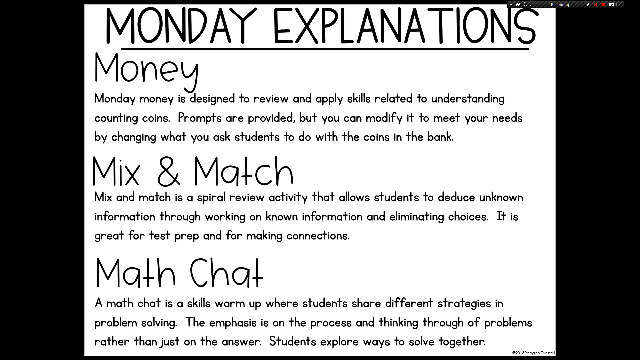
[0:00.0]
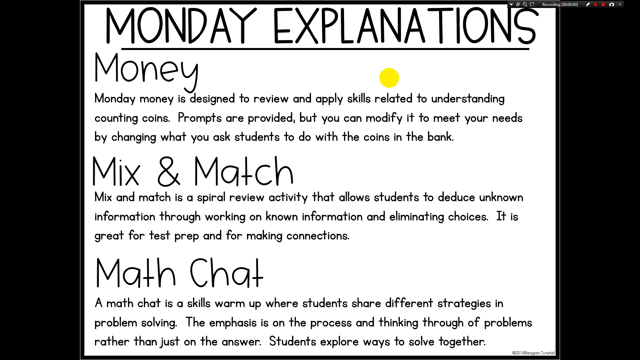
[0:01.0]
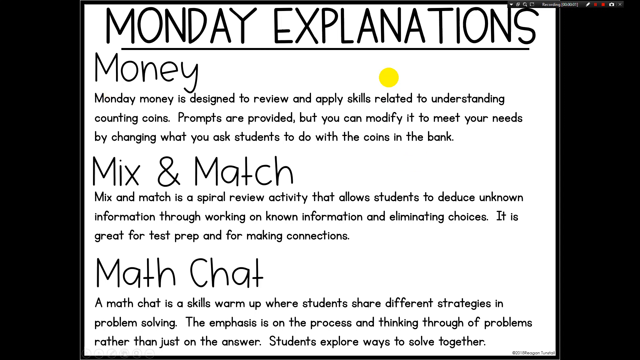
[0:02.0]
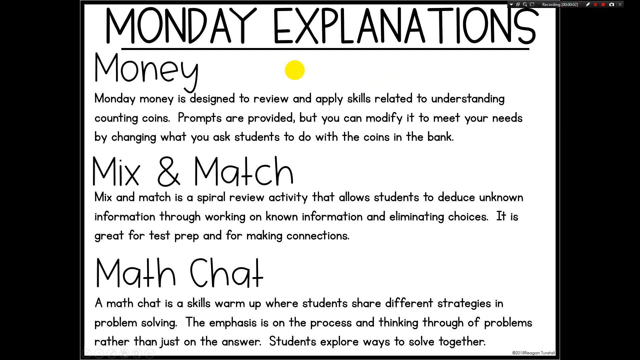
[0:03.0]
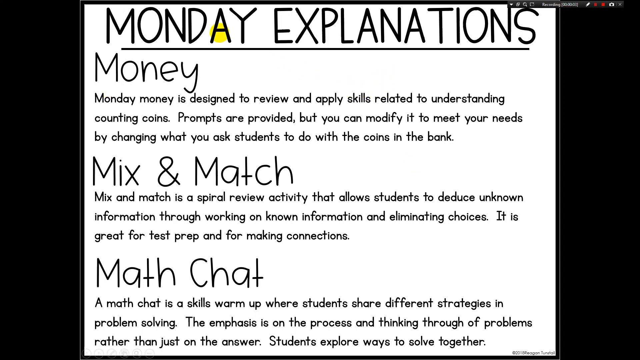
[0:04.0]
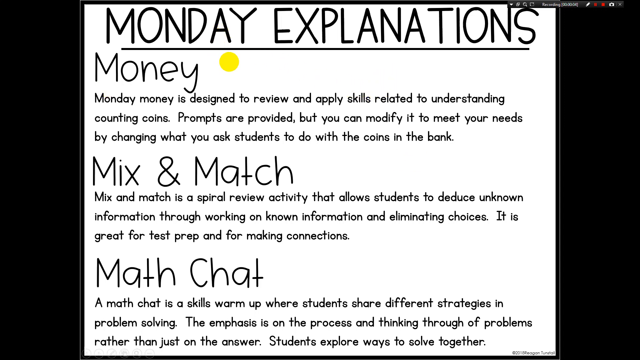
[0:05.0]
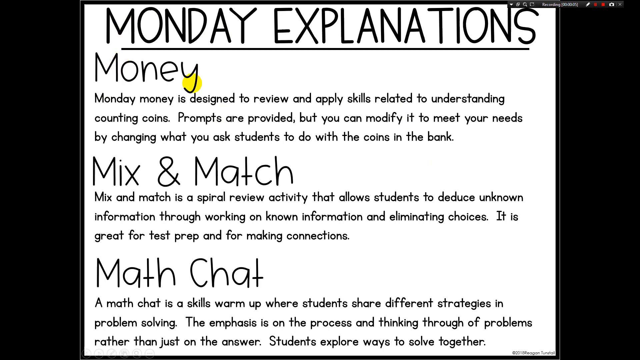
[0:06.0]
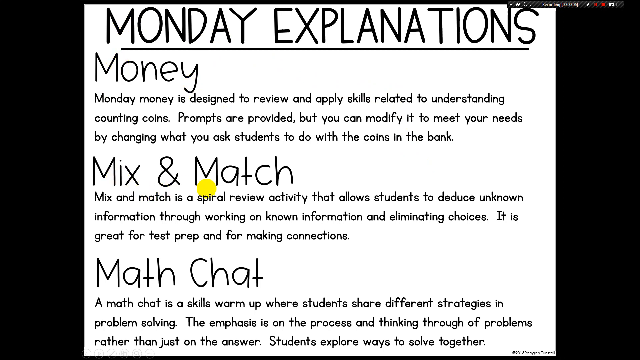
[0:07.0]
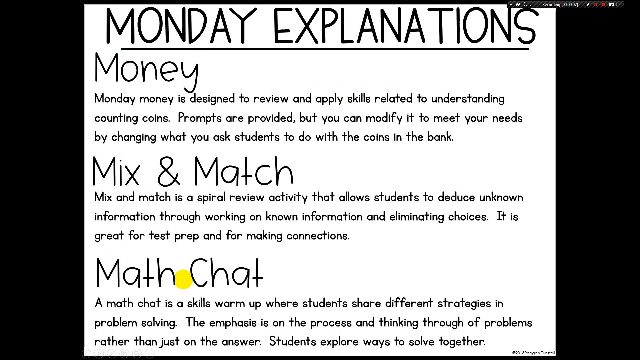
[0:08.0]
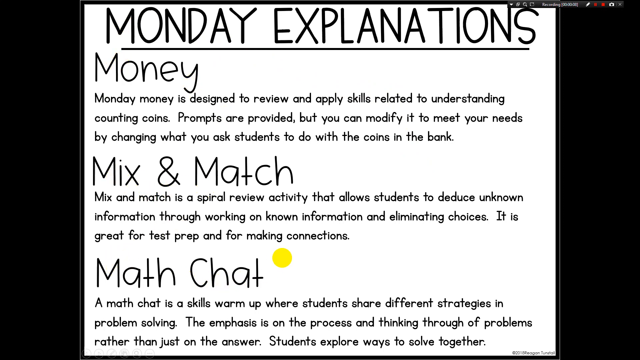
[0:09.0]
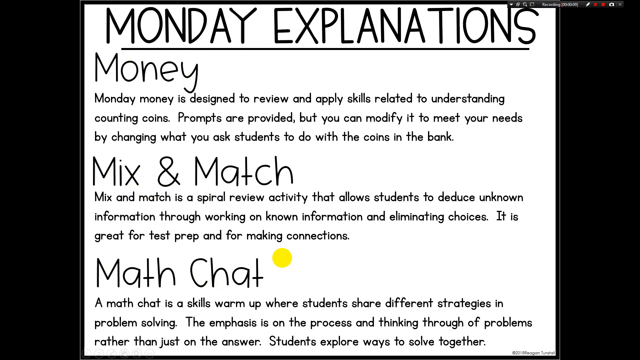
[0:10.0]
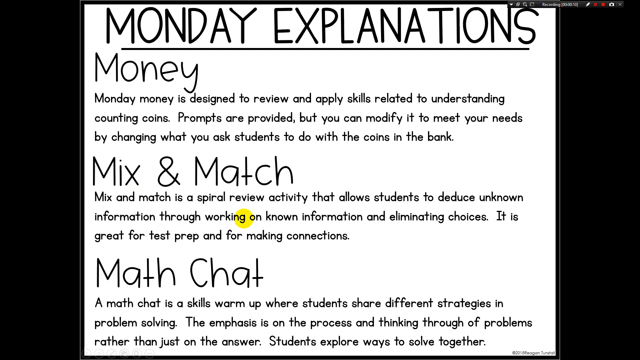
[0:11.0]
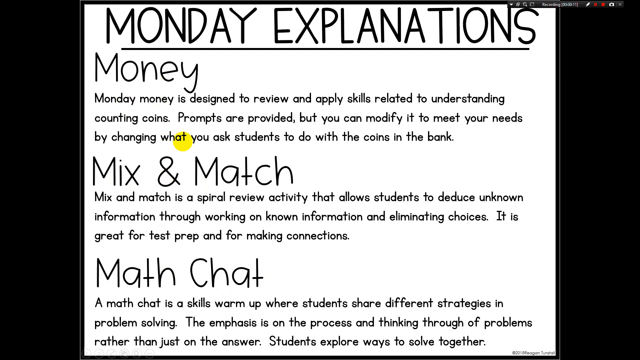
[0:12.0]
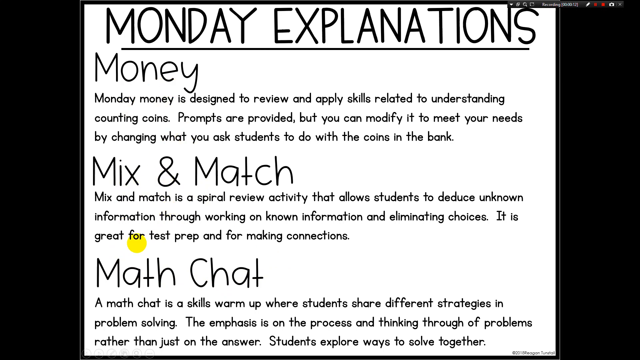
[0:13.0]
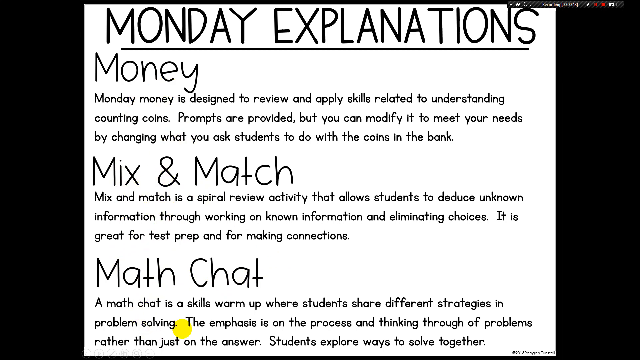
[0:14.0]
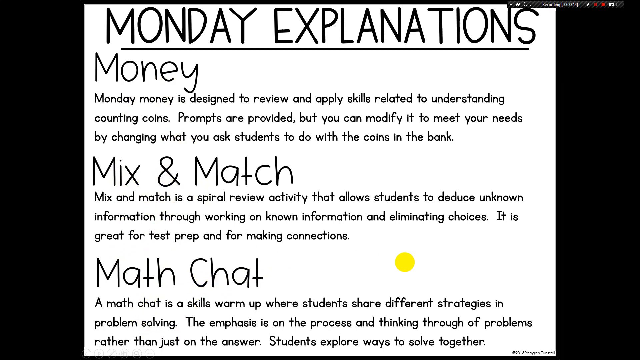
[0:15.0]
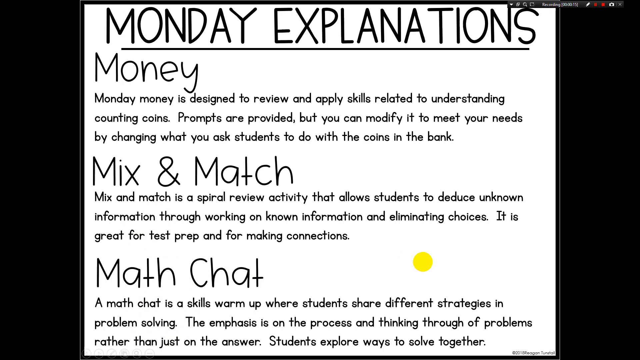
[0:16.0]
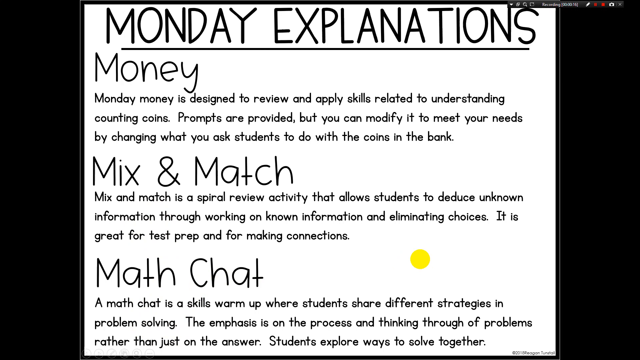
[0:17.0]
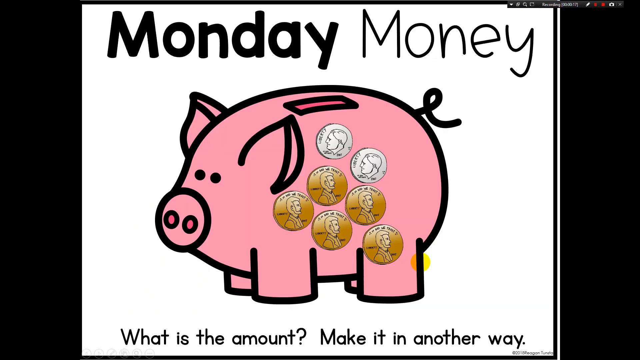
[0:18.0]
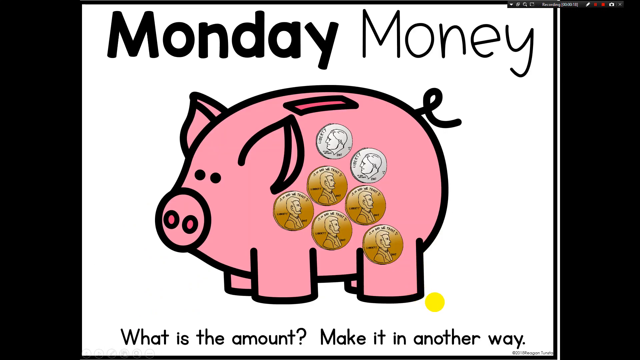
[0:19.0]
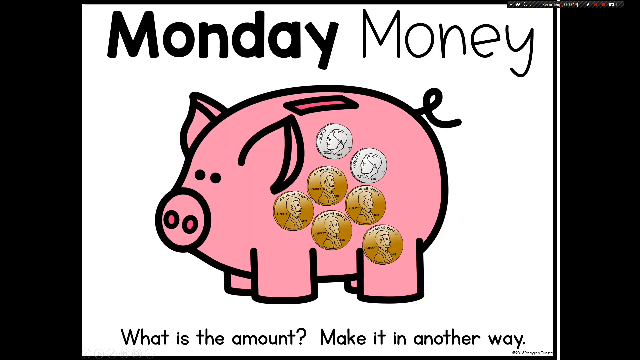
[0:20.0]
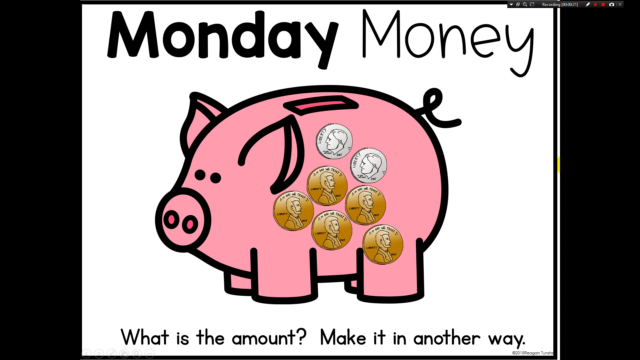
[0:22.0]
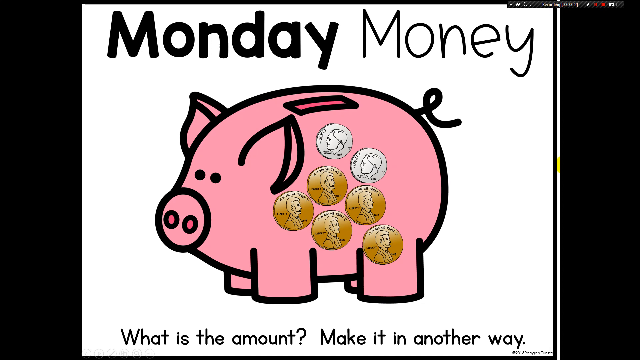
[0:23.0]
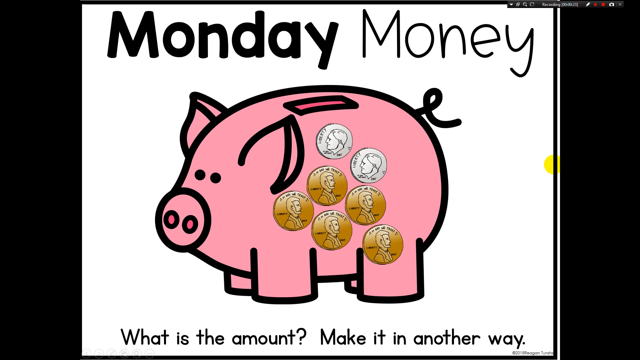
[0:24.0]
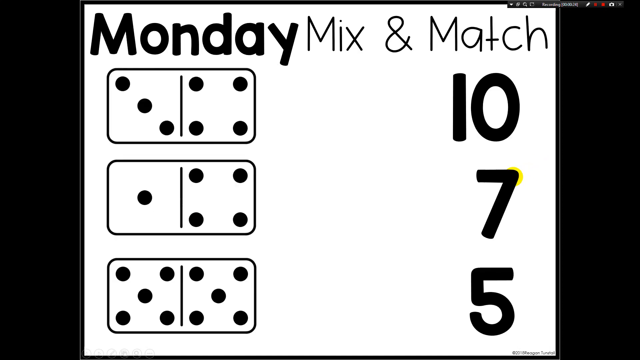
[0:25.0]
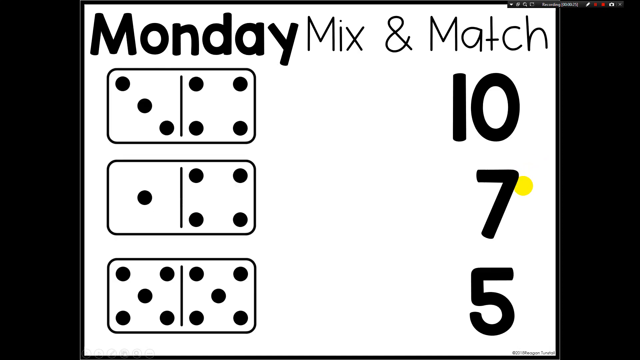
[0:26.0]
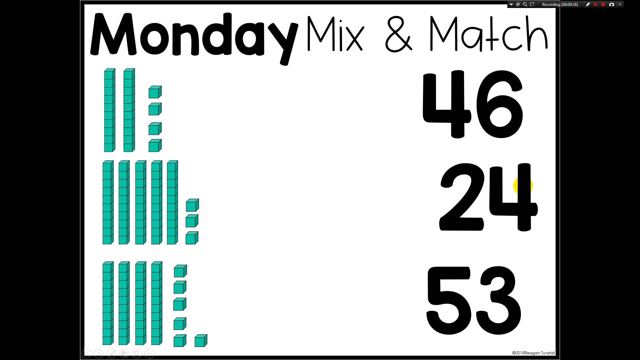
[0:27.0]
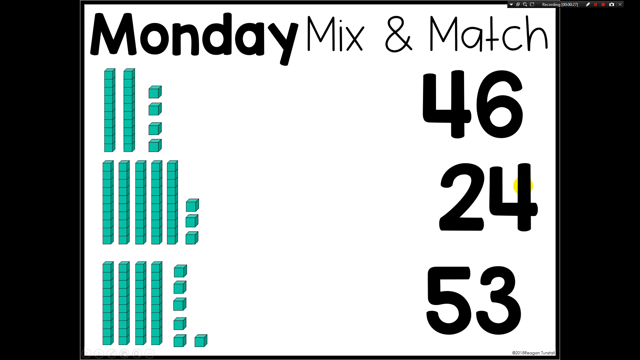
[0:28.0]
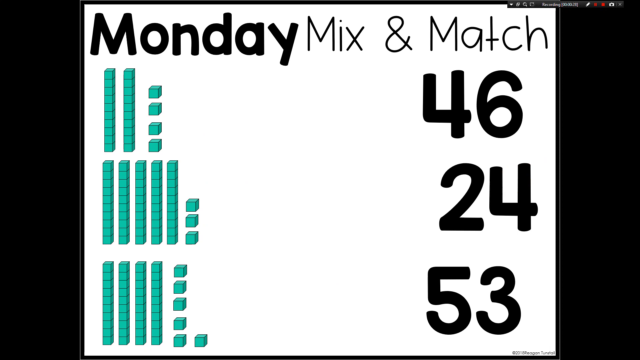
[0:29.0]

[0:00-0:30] Text on screen describes the Monday activities: "Money Monday is designed to review and apply skills related to understanding counting coins. Prompts are provided, but you can modify it to meet your needs by changing what you ask students to do with the coins in the bank." Another section reads "Mix and match is a spiral review to deduce unknown information through working on known information and eliminated choices. It is great for test prep and for making connections." A further passage reads "The emphasis is on the process and thinking through a problems rather than just on the answer." A small yellow cursor moves across the screen. Then a pink piggy bank with little coins in it appears, with the text "what is the amount" and "Monday mix and match".